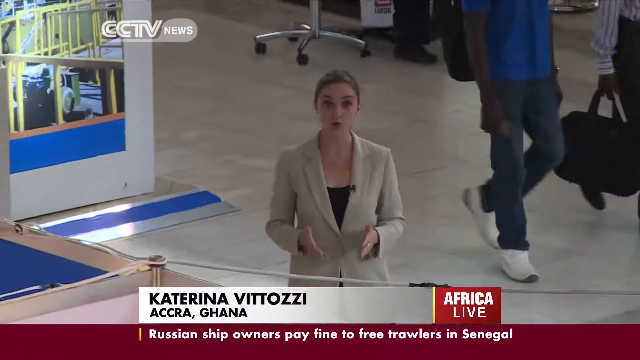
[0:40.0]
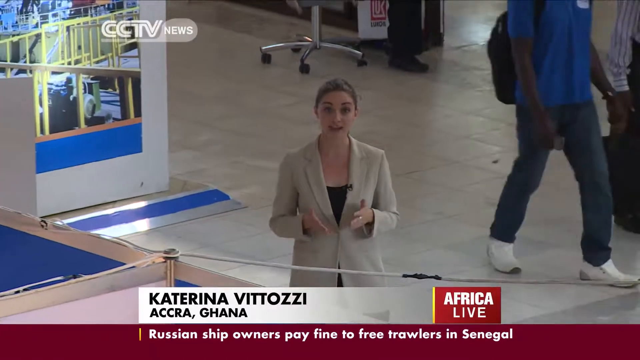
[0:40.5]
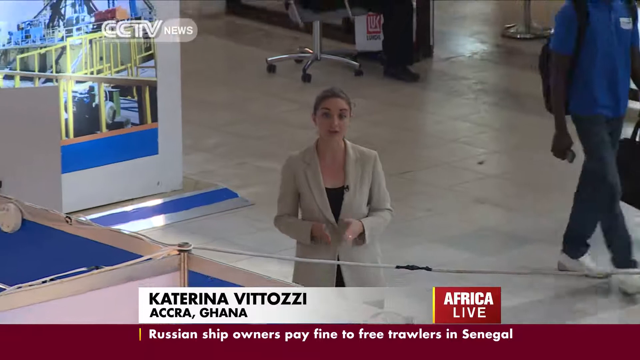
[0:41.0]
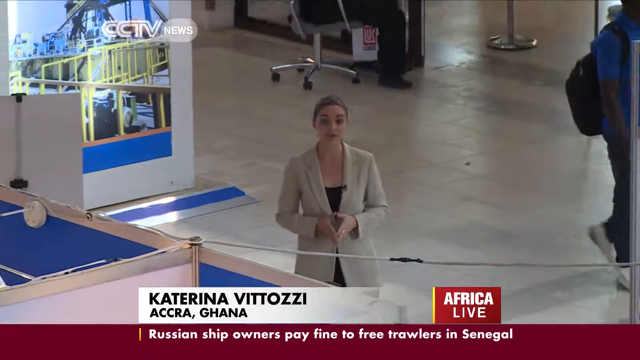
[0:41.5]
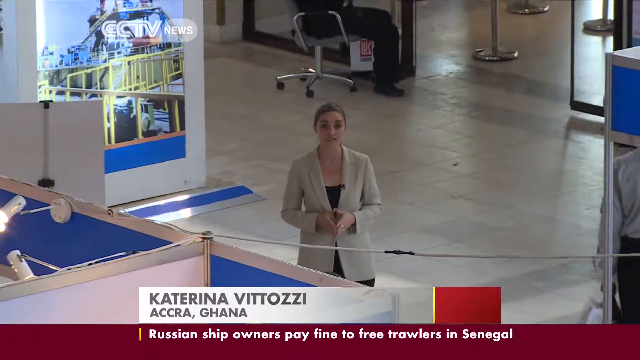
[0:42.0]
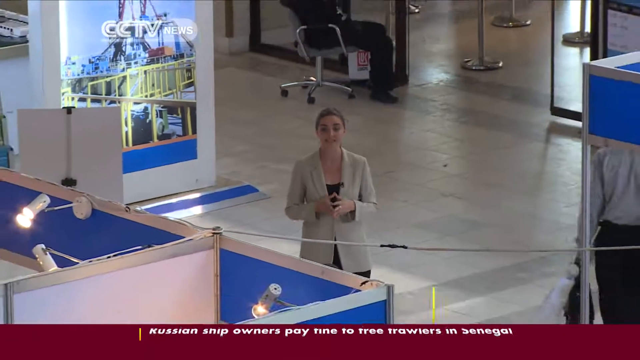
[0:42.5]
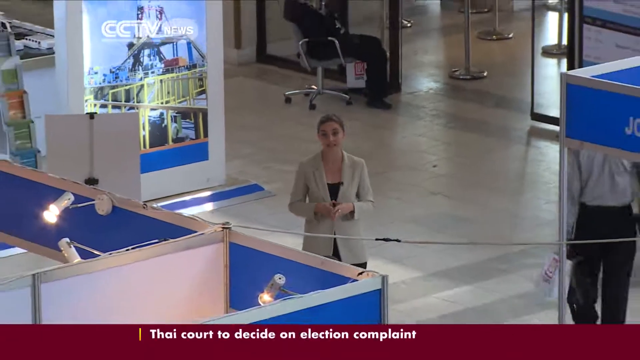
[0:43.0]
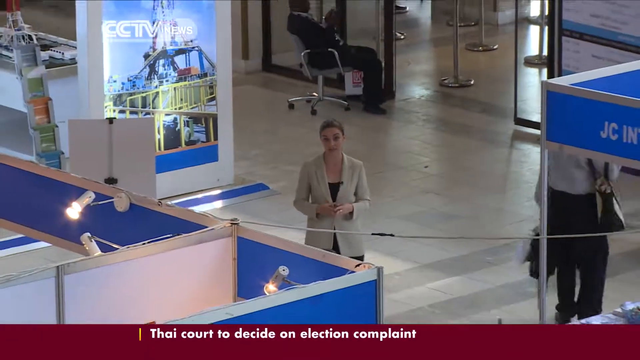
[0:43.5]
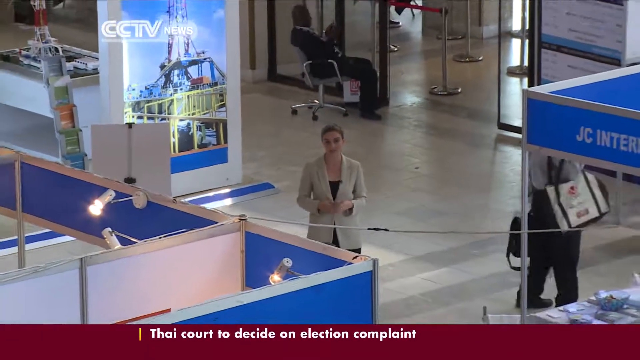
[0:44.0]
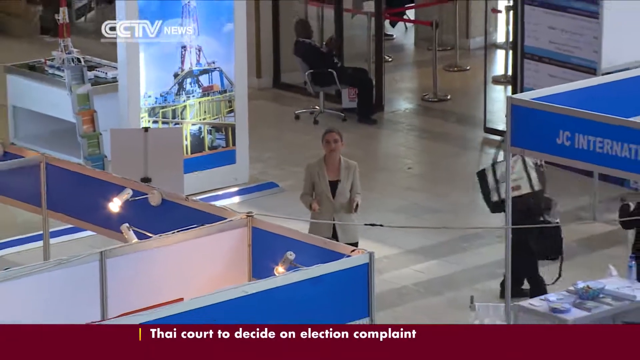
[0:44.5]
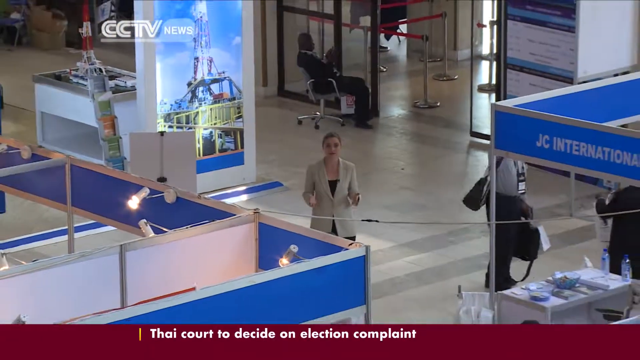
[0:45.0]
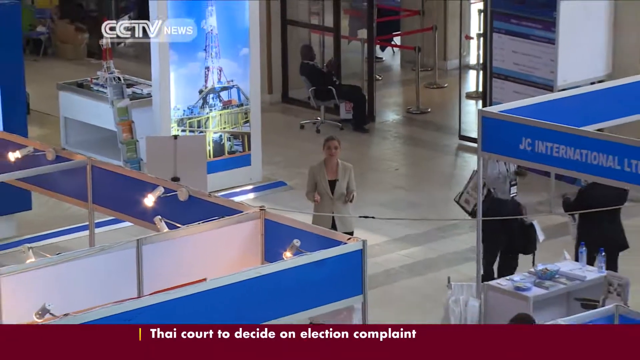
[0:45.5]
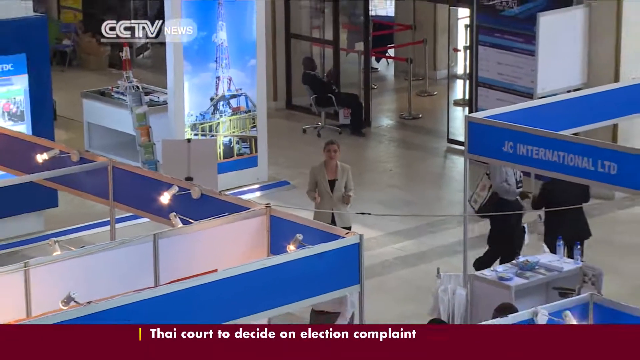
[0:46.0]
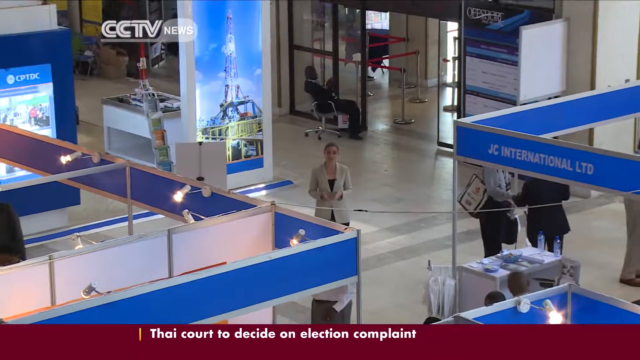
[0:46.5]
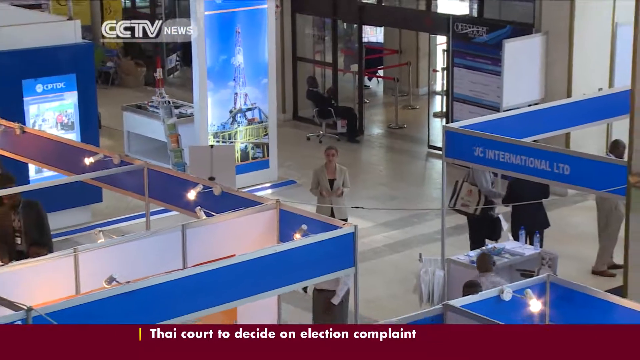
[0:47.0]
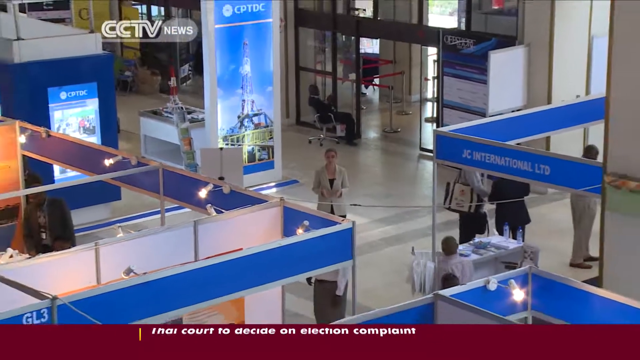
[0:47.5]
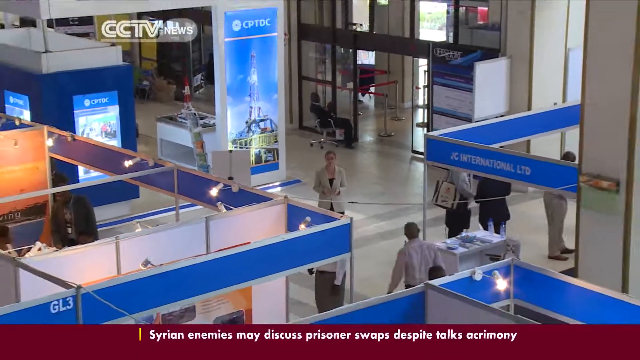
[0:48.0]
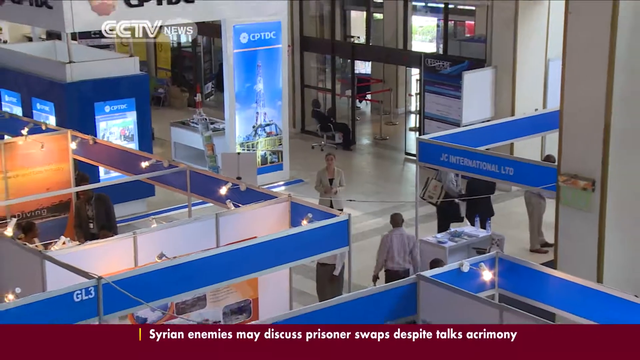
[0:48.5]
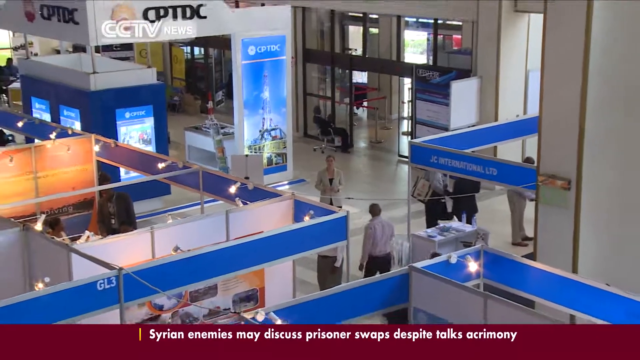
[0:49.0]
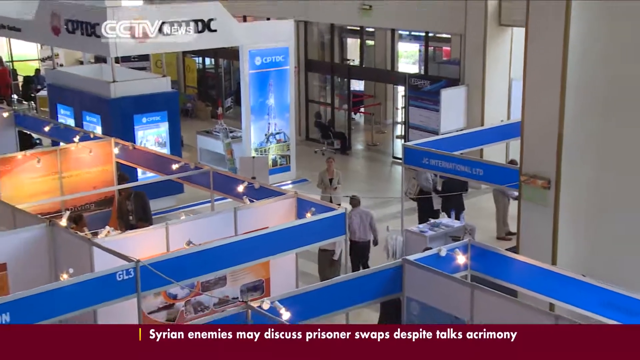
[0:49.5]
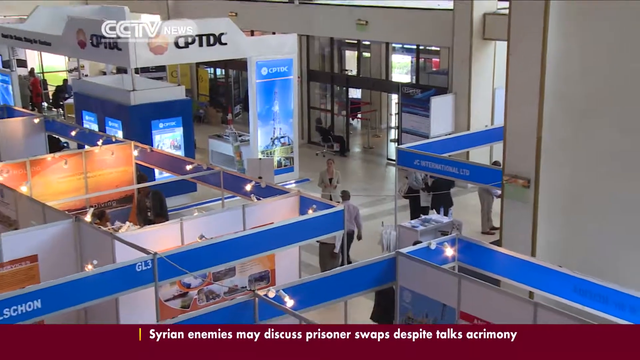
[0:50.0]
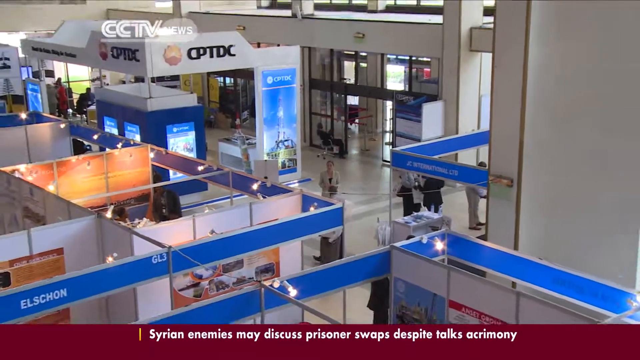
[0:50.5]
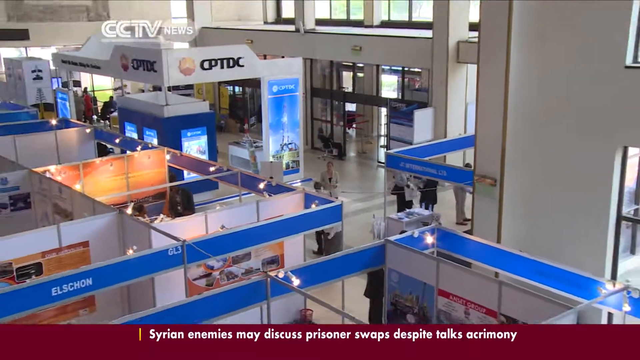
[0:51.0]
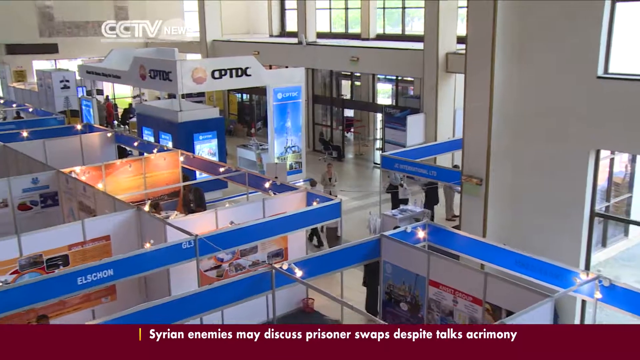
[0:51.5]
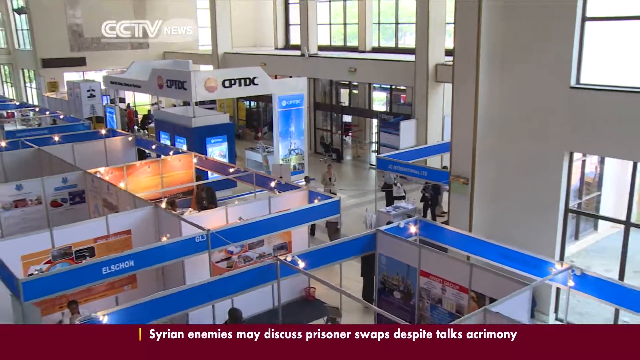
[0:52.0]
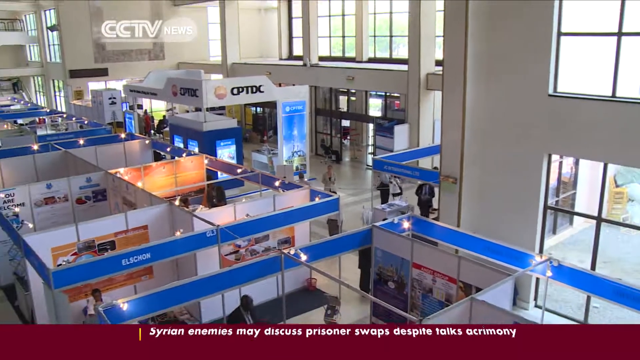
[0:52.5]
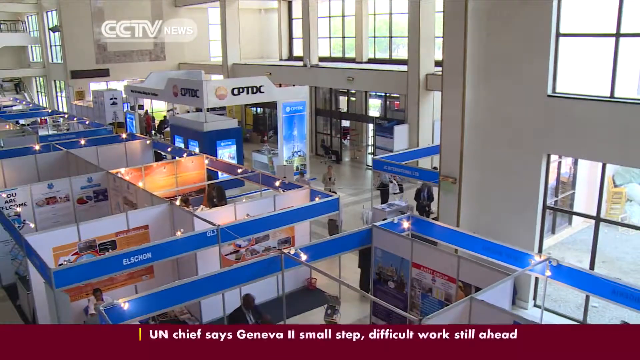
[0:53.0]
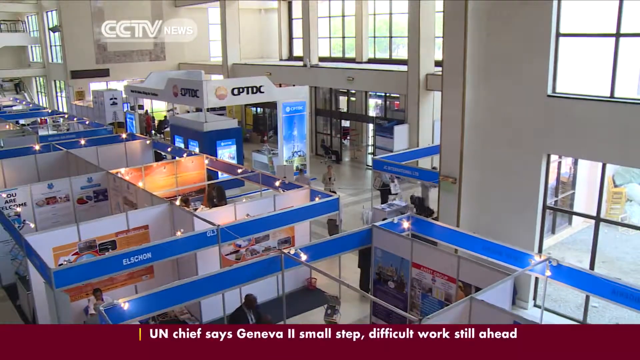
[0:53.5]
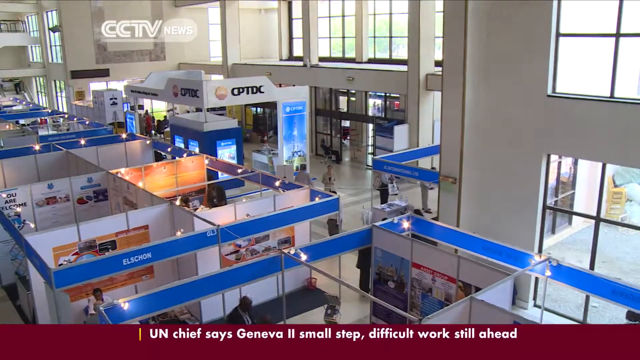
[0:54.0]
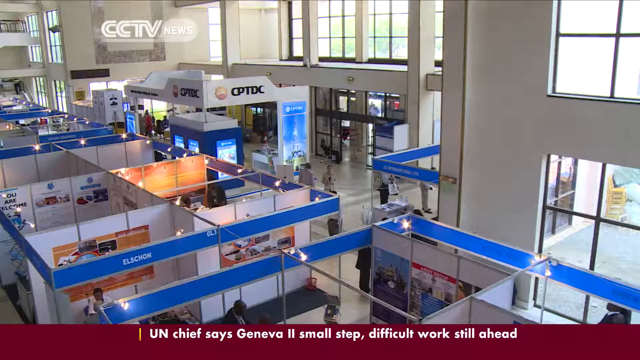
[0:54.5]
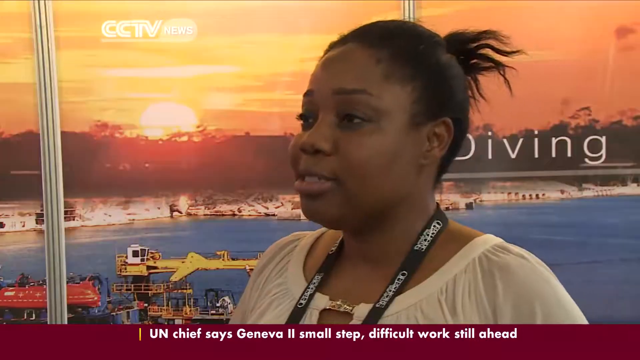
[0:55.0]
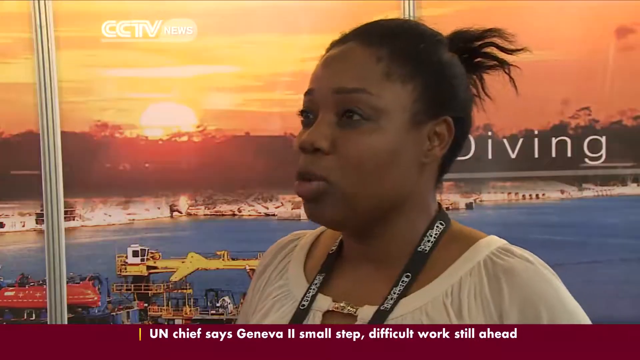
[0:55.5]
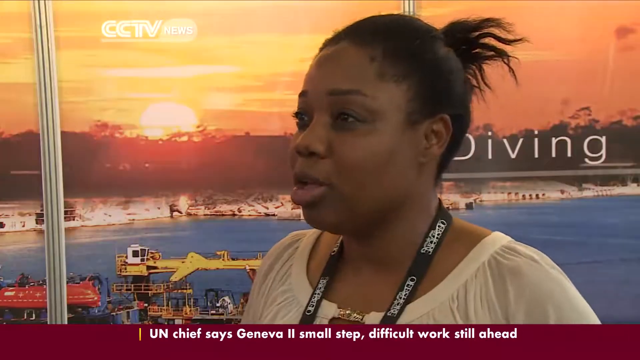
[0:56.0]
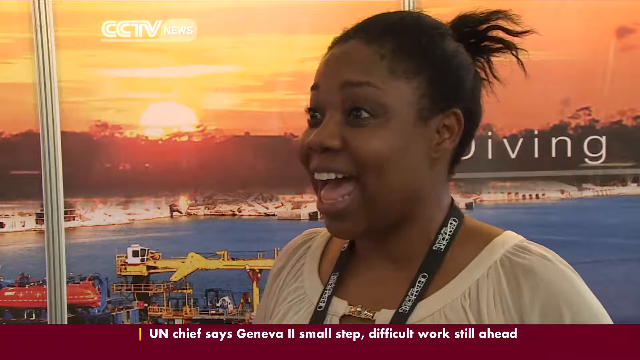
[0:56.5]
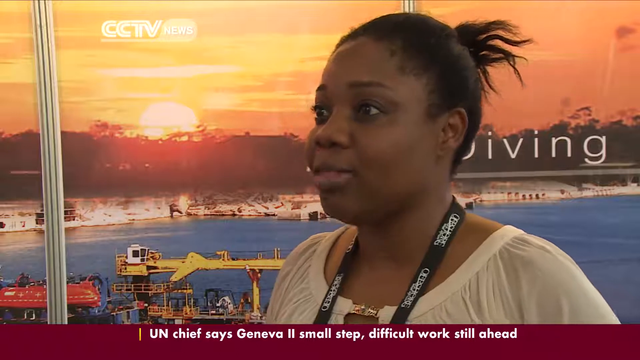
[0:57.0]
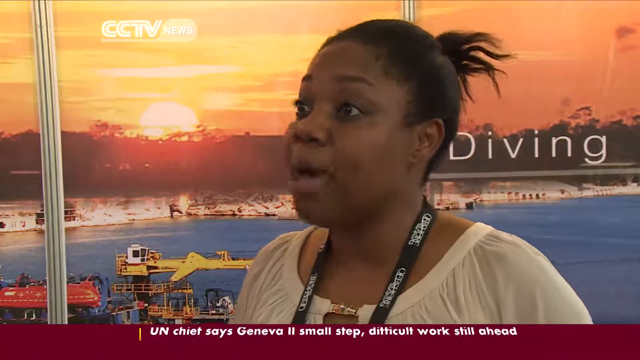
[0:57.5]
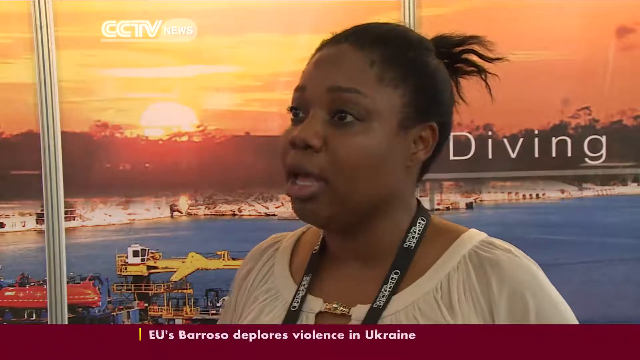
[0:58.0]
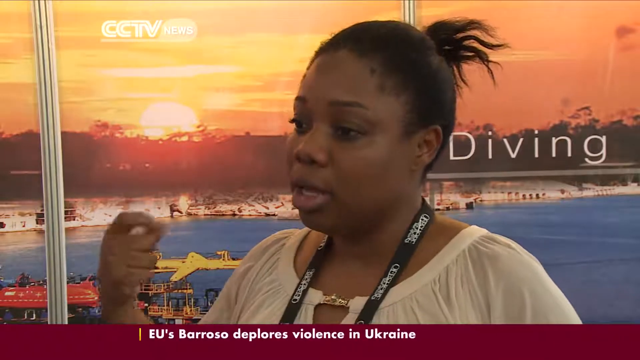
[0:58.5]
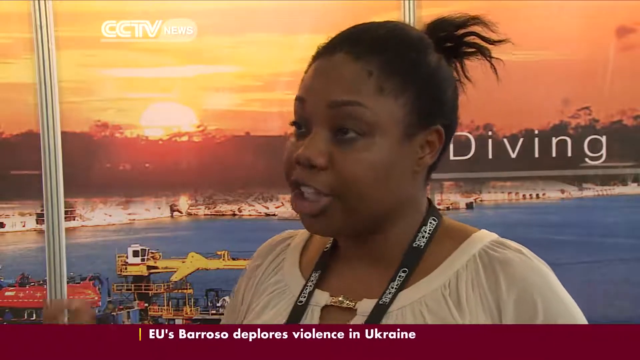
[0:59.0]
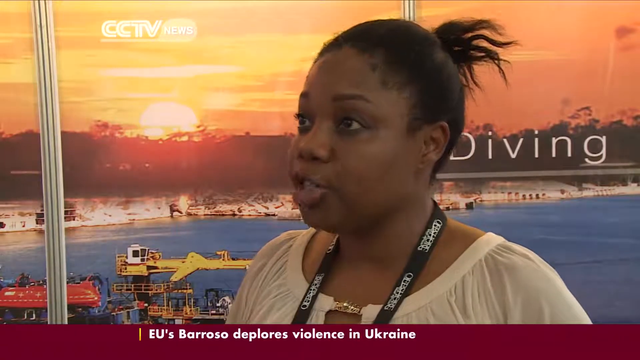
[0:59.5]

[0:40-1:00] The heading "CCTV News" appears in the top left corner, written in grey and white; it is the news channel hosting the broadcast. The camera is aimed at a heading that reads "Welcome to offshore." At the bottom, a heading reads "18th annual North Africa offshore oil conference," followed by a red background reading "Africa live." Next, people walk around in cubicles that seem to be situated in a mall, since there are quite a lot of people and the building appears to be very big. Some people wear cards around their necks, possibly to access certain parts of the building. A middle-aged man talks towards the camera and speaks with some of his colleagues.